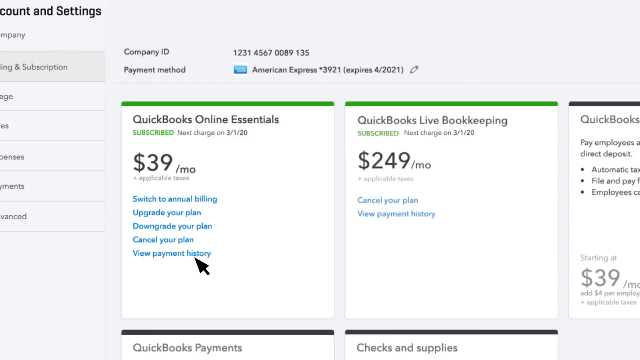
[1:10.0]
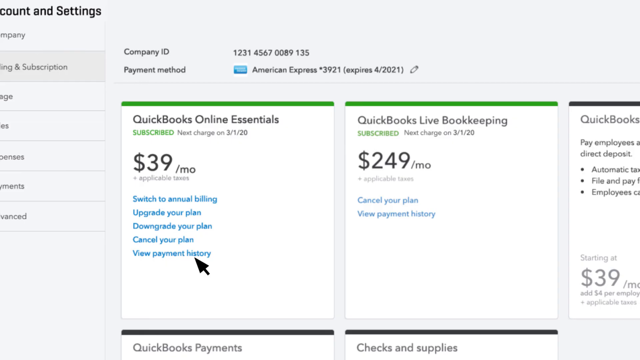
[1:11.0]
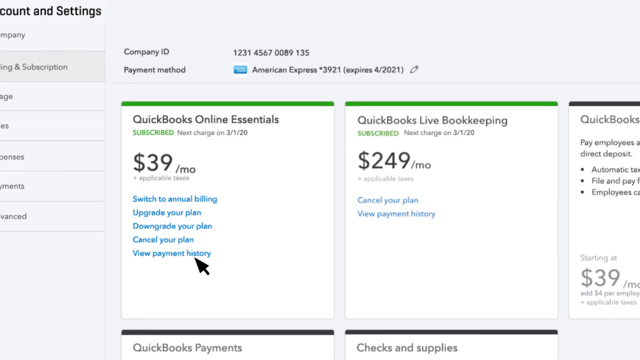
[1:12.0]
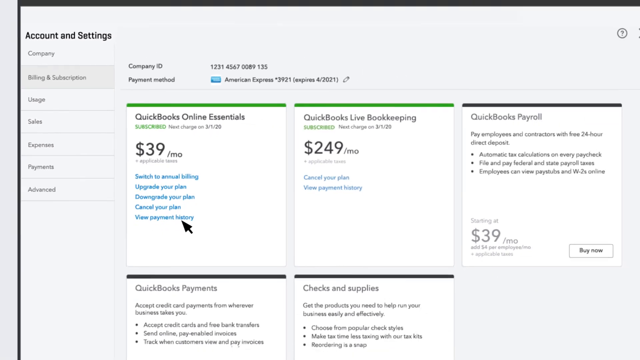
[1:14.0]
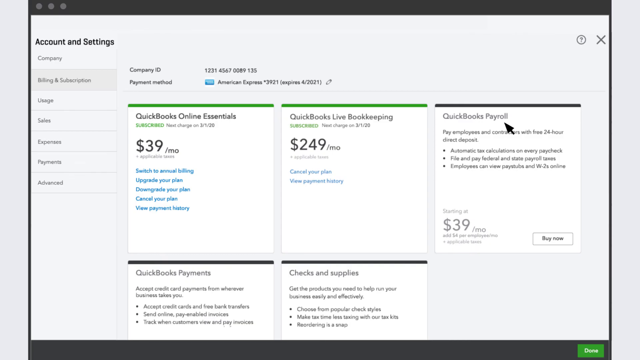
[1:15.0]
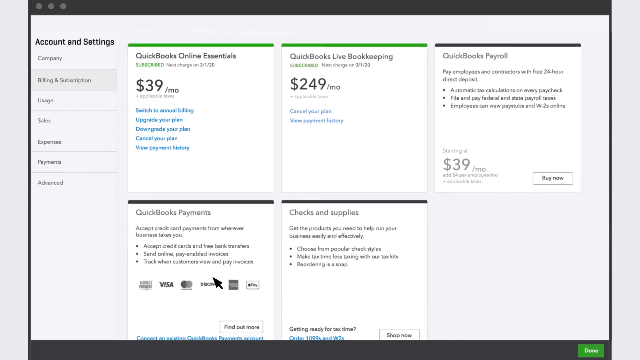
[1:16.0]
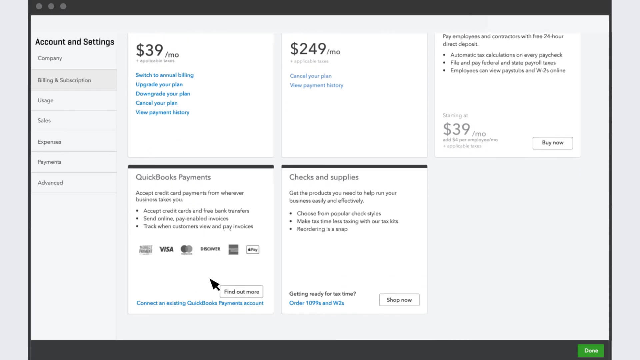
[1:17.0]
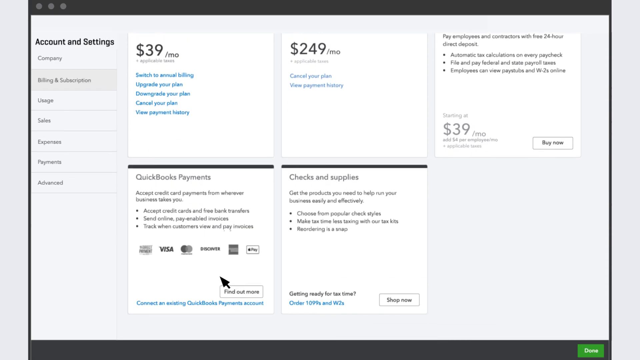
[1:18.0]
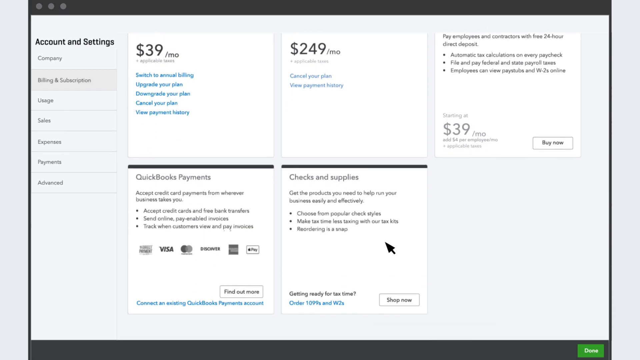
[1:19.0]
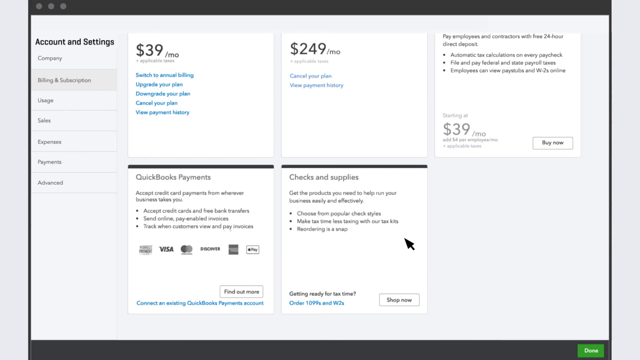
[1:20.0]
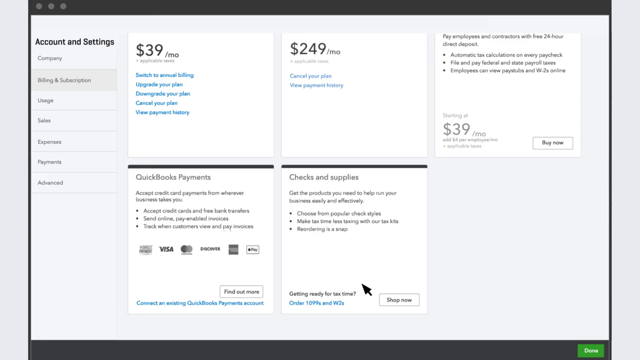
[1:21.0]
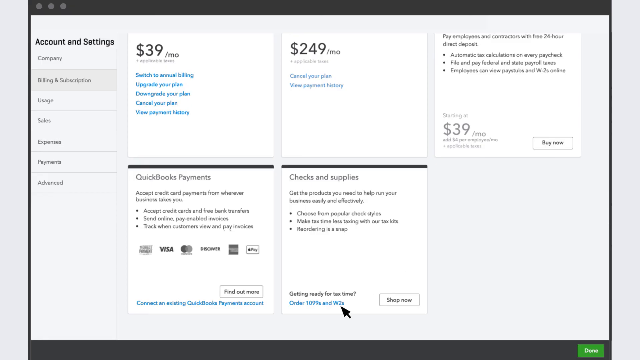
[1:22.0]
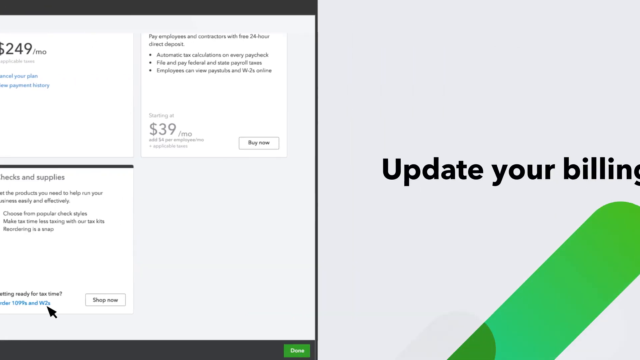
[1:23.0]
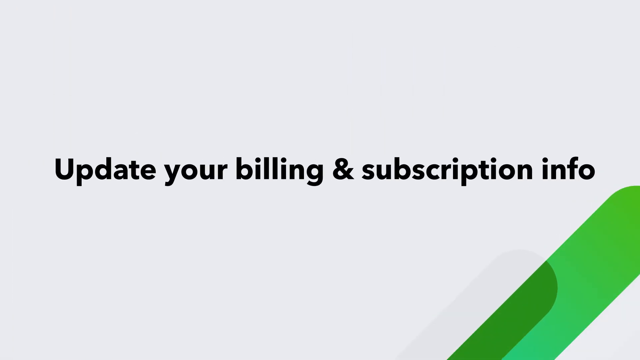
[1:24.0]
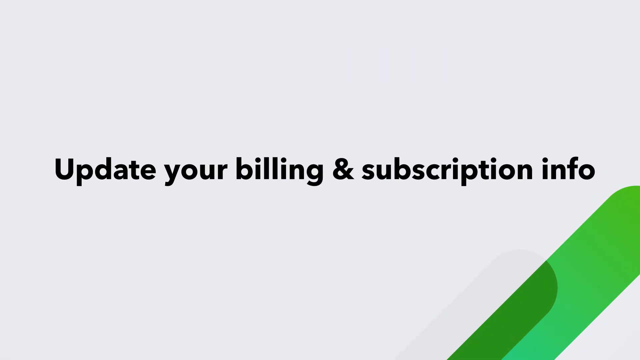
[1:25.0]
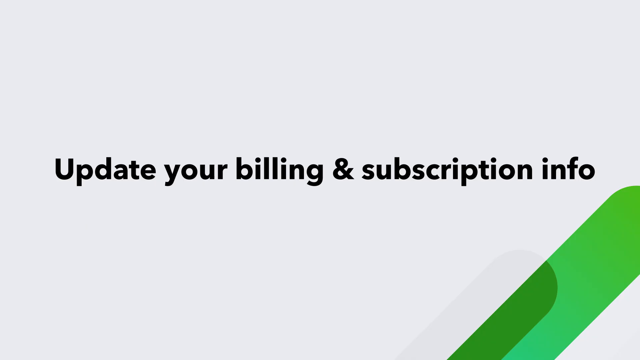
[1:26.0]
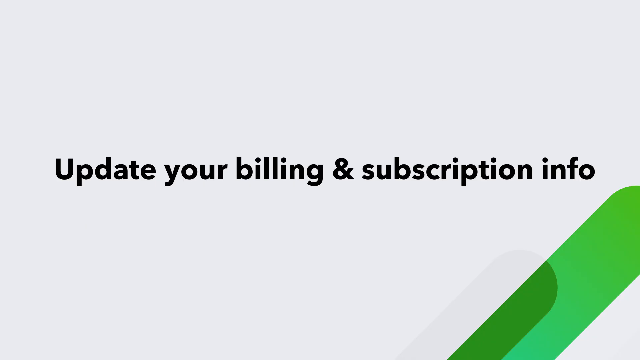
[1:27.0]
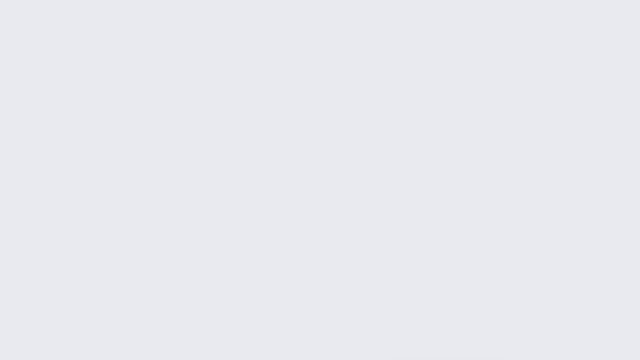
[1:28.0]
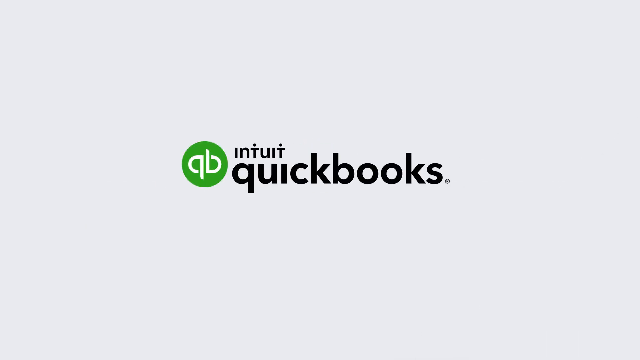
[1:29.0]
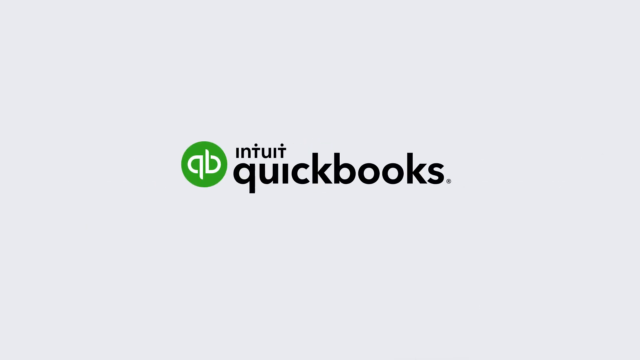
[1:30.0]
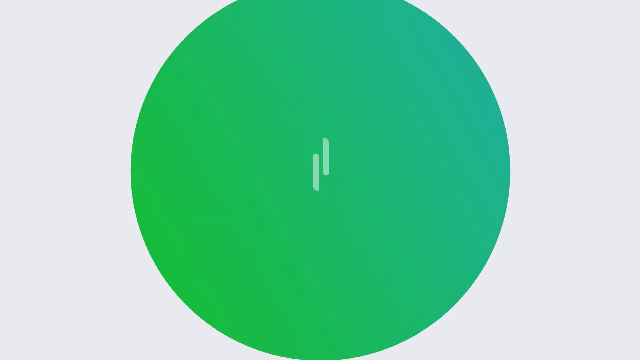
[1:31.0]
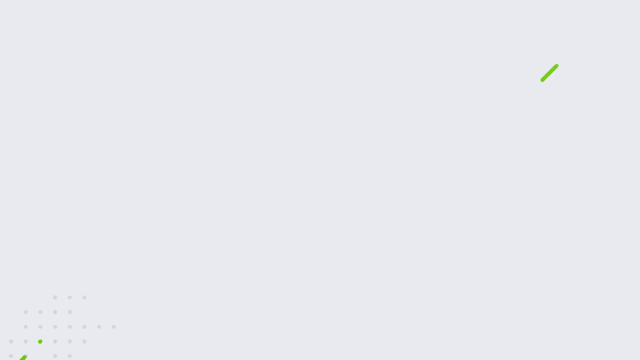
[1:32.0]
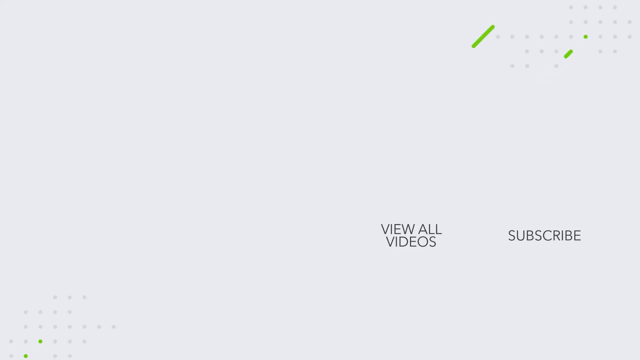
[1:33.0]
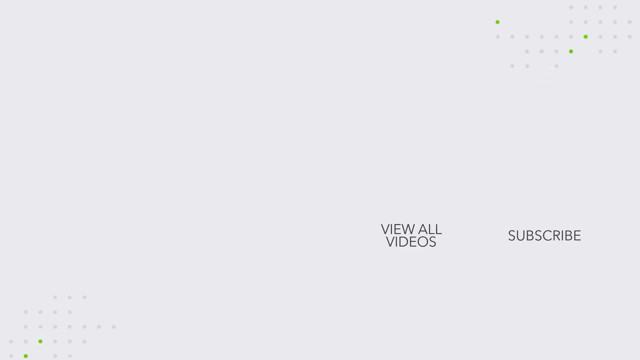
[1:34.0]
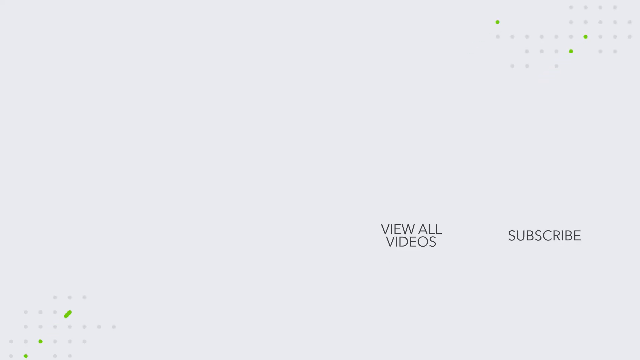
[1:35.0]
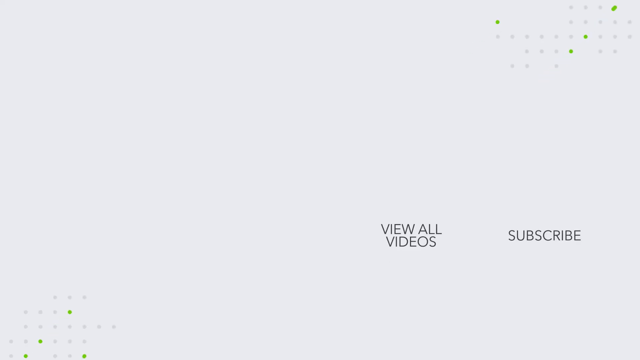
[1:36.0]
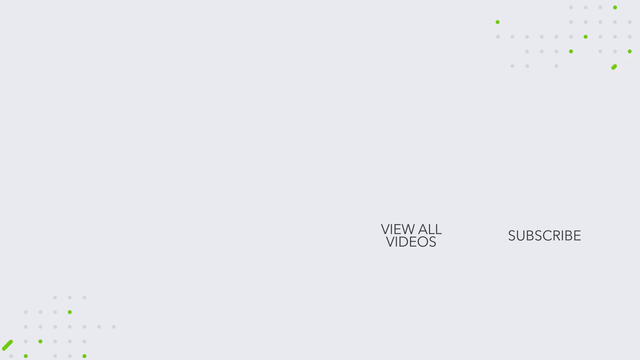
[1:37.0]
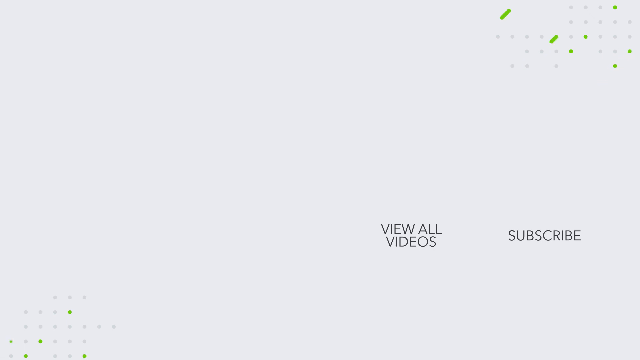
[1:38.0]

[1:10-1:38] The navigation moves to a page reading "view payment history", where payment history can be viewed. Below it is a panel reading "QuickBooks payments" that shows the accepted payment types, including Visa, MasterCard and credit cards. It reads "accept credit card payments from wherever business takes you", and also states that it accepts credit cards and free bank transfers and that online, pay-enabled invoices can be sent. The video then moves to the next page, where one can order and update billing and subscription information, then shows the QuickBooks logo and goes to a page with options to view all and subscribe, which seems to be the last page of the video.